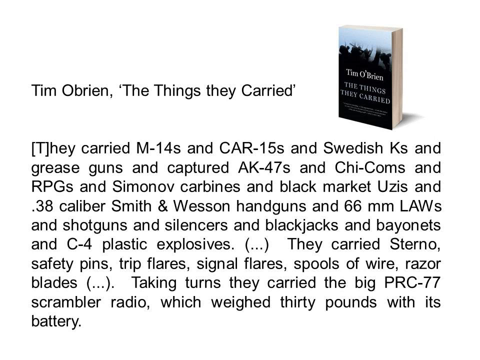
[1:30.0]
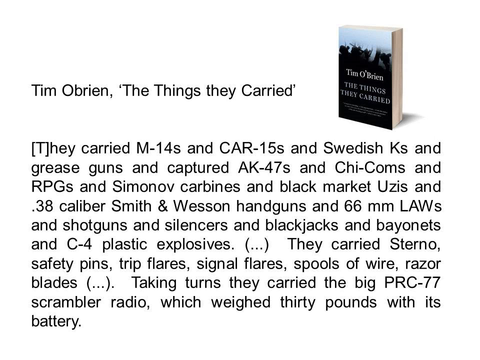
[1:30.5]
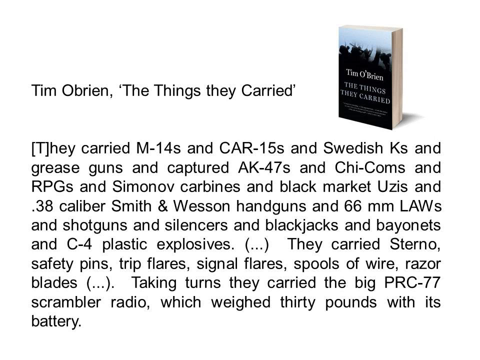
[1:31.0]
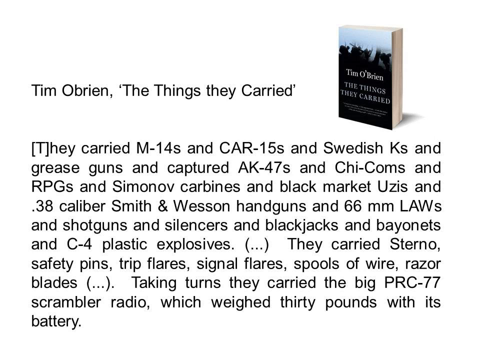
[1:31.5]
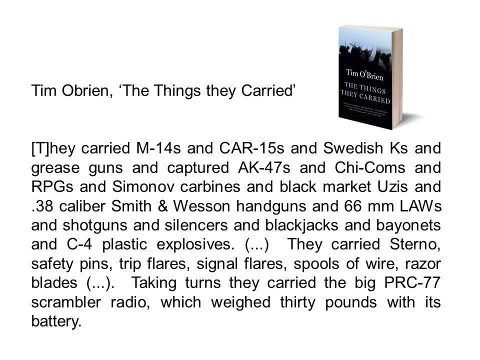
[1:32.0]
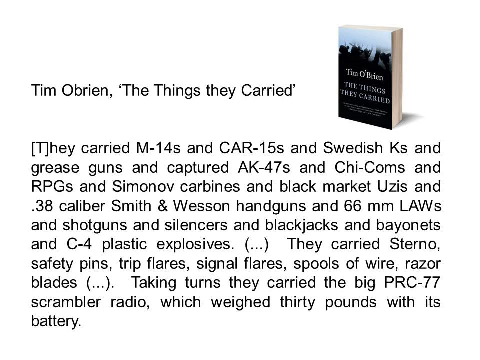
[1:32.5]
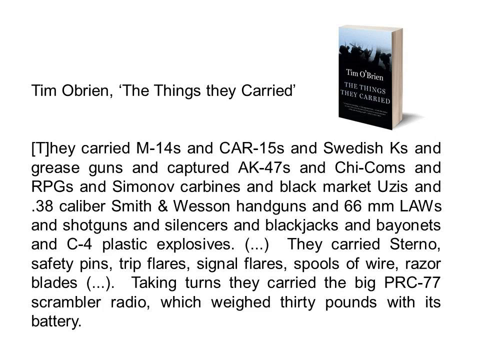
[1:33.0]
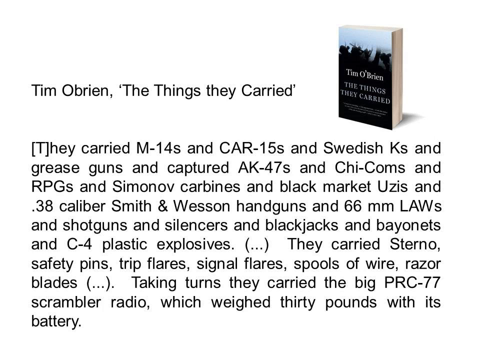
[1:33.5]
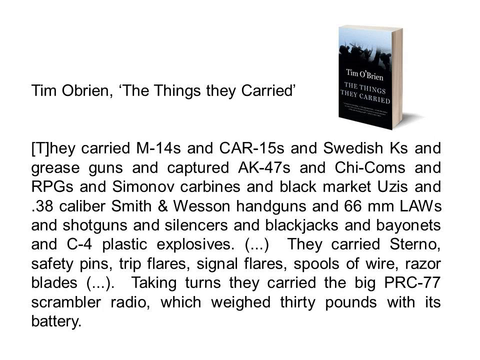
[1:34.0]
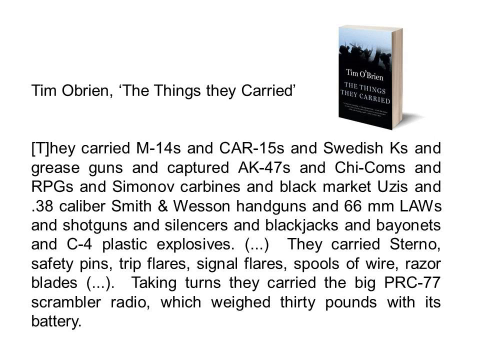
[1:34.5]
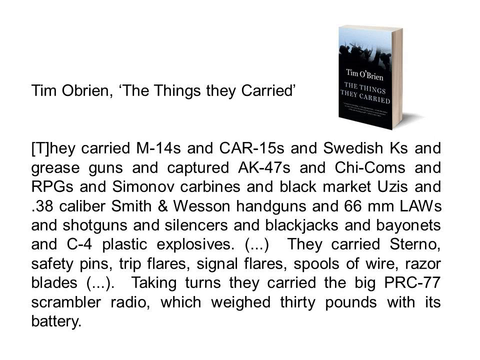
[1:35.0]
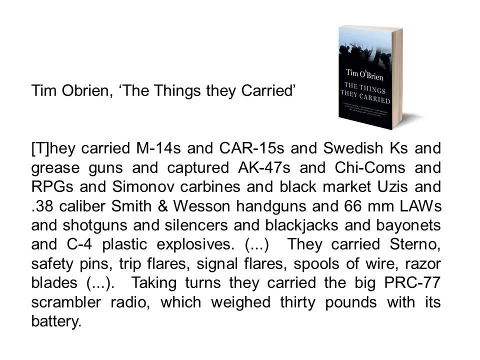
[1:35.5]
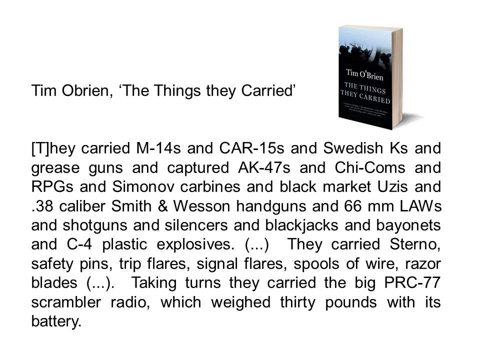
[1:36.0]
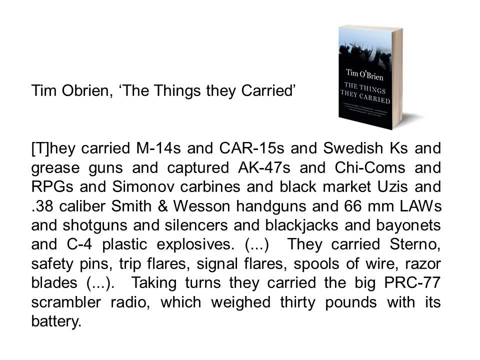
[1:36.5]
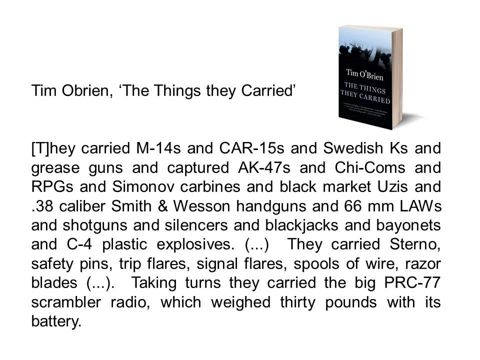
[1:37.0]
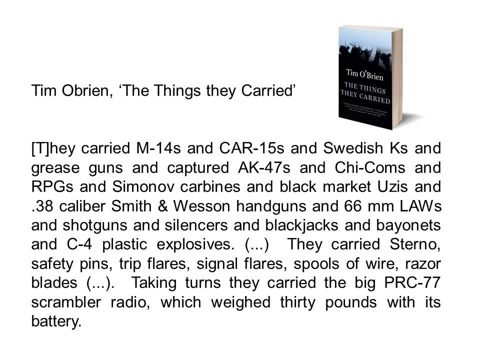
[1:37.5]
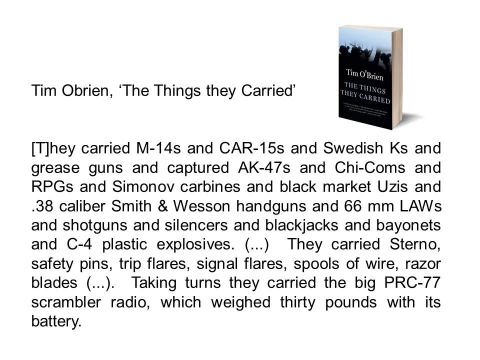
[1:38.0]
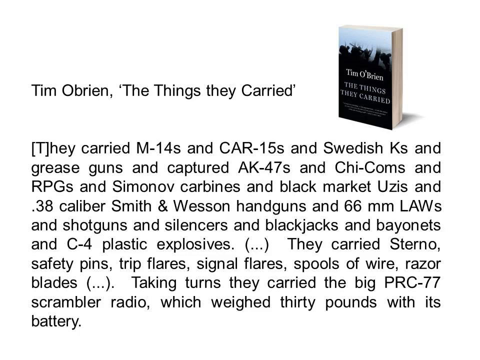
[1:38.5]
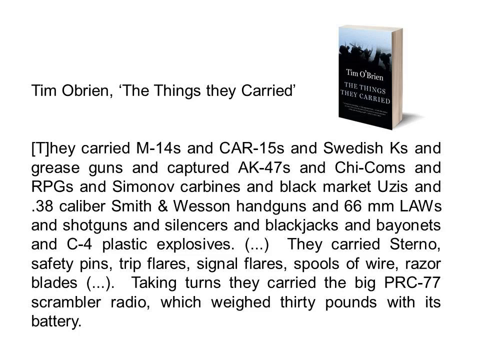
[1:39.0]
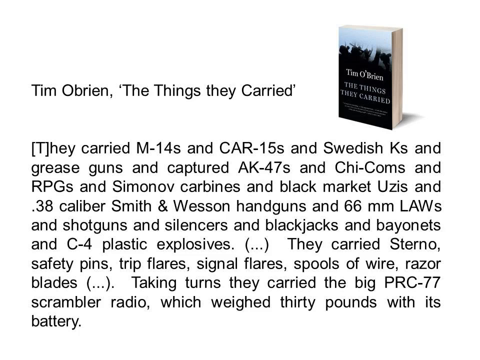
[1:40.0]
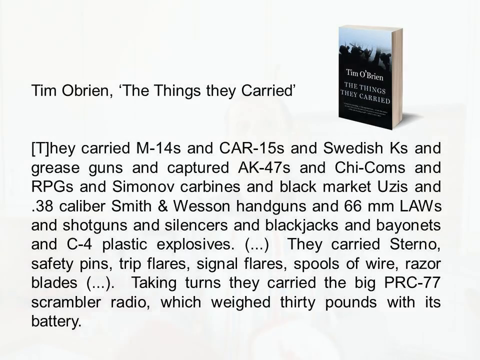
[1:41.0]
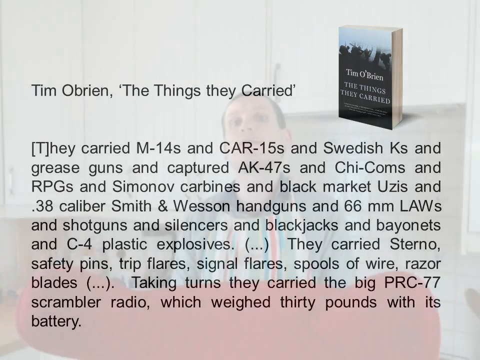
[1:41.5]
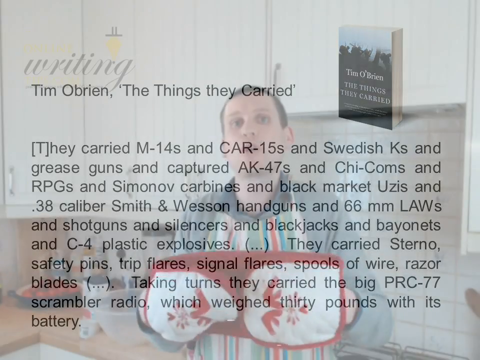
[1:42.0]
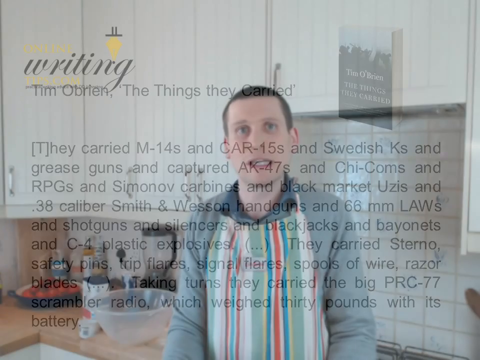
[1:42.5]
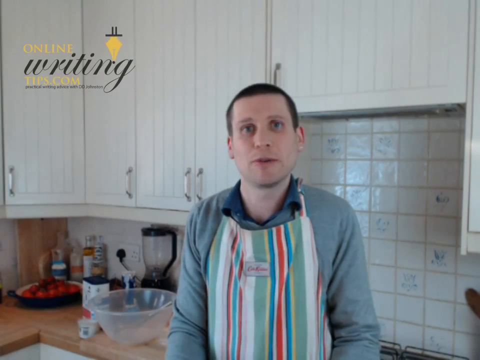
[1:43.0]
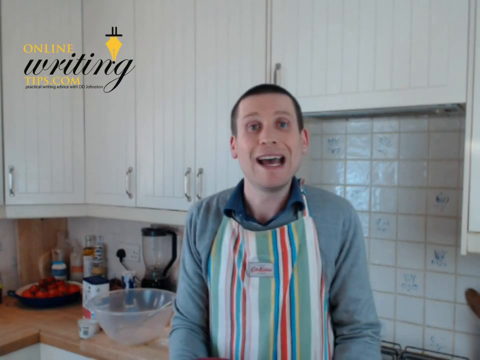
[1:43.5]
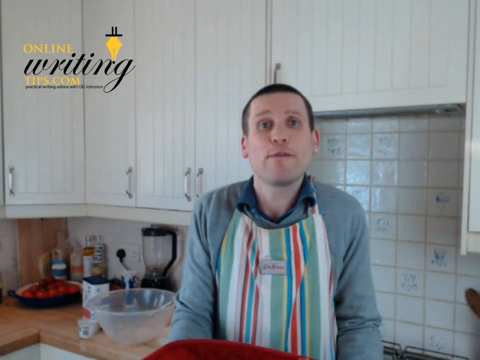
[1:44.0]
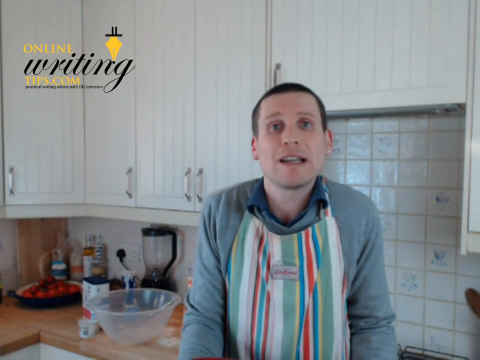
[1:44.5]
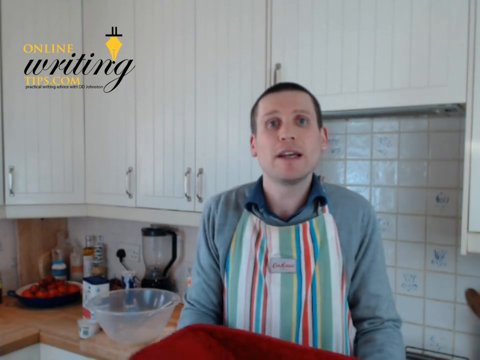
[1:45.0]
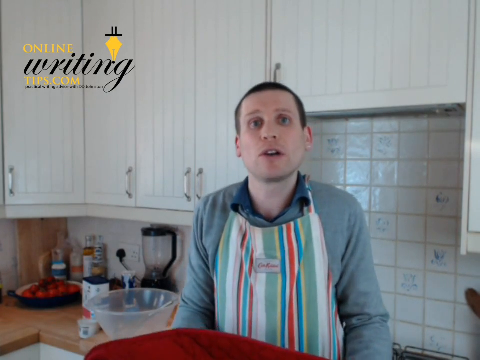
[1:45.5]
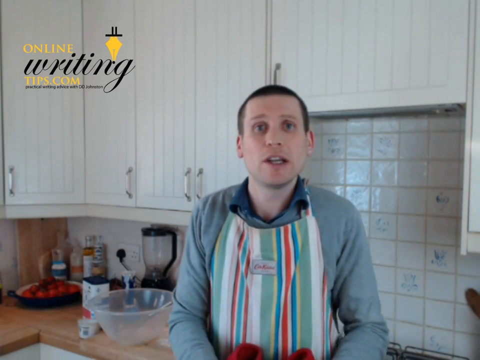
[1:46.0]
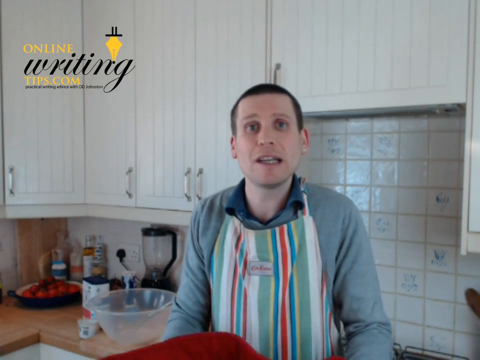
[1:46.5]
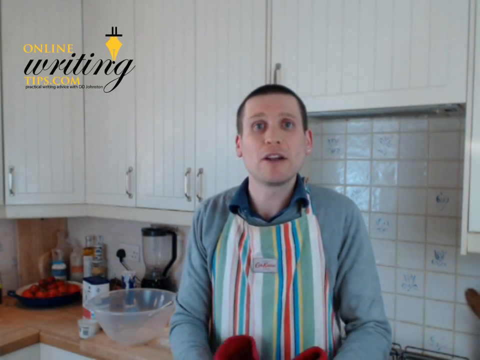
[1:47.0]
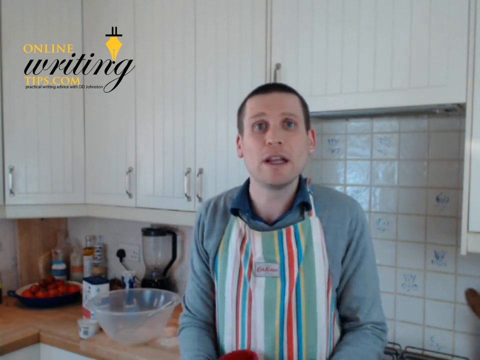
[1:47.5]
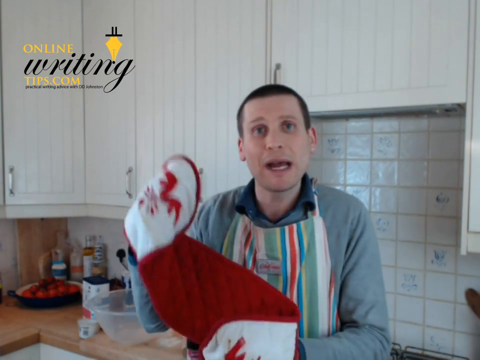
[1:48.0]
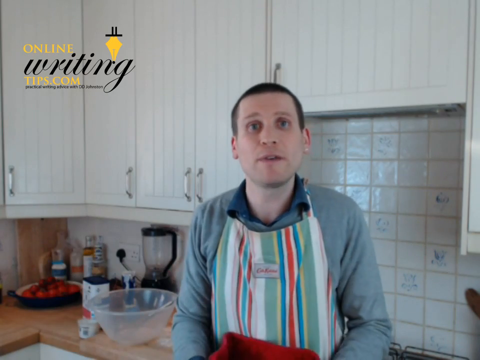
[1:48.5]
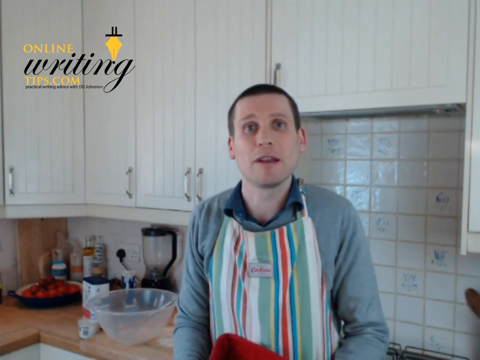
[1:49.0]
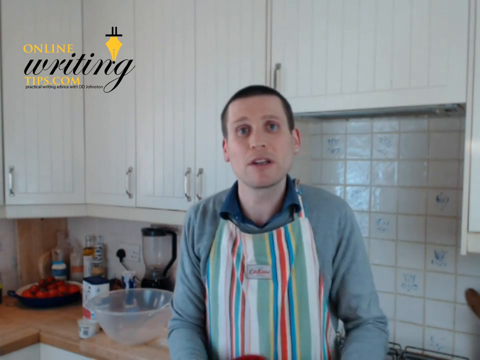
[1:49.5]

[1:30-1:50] A white background shows a book in the top right corner reading "Tim O'Brien"; the book is The Things They Carried. Beside it are the same words, "Tim O'Brien, The Things They Carried". Underneath, a passage says "They carried M-14s and CAR-15s and Swedish Ks and Grease Guns and captured AK-47s and Chi-Coms and RPGs and Simonov Carbines and Black Market Uzis and .38 caliber Smith and Wesson handguns and 66 millimeter LAWs and shotguns and silencers and blackjacks and bayonets and C4 plastic explosives. They carried Sterno safety pins, trip flares, signal flares, spools of wire, razor blades." It continues about the big PRC-77 Scrambler radio, which weighed 30 pounds with its battery. The scene then changes back to the man standing in the kitchen in a gray shirt, striped apron and red oven mitts, continuously talking to the camera and moving his hands around a lot in a very animated way.